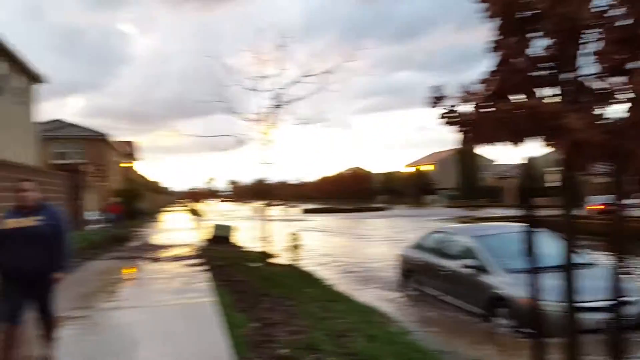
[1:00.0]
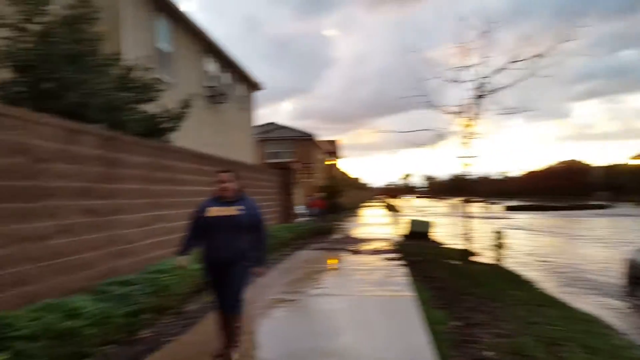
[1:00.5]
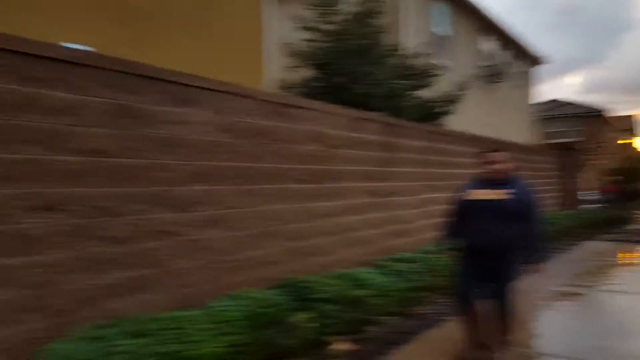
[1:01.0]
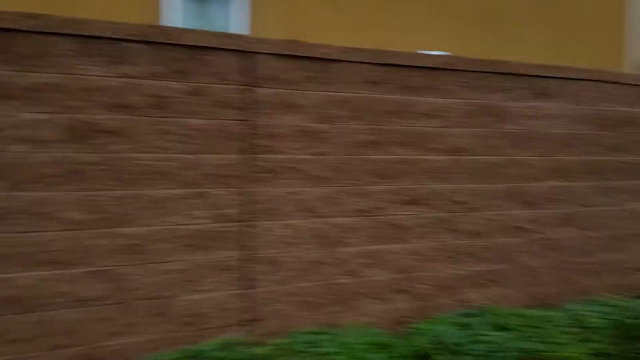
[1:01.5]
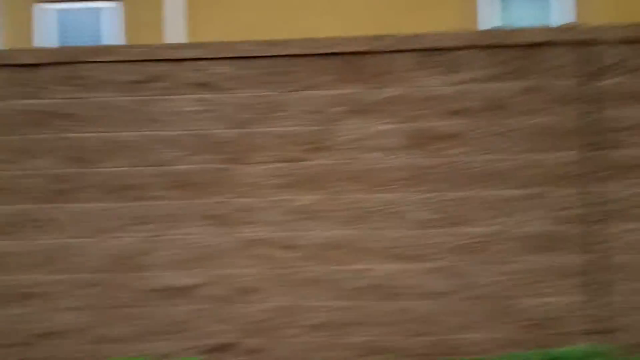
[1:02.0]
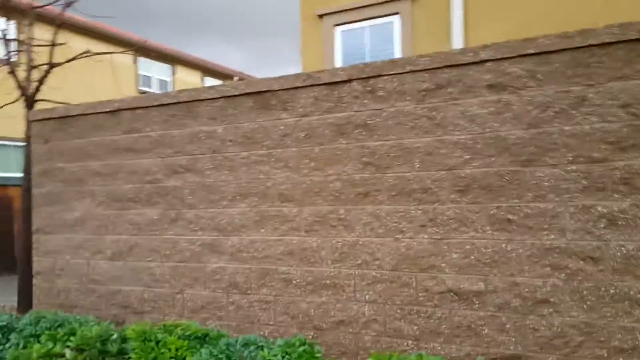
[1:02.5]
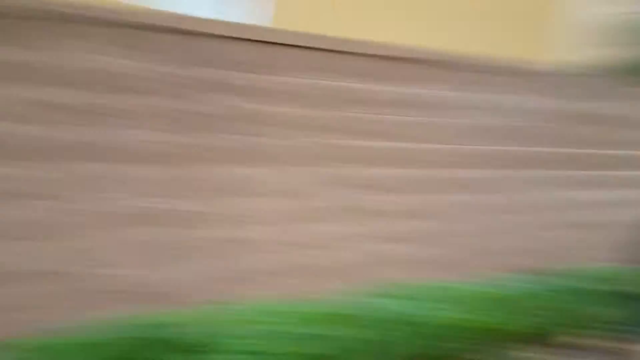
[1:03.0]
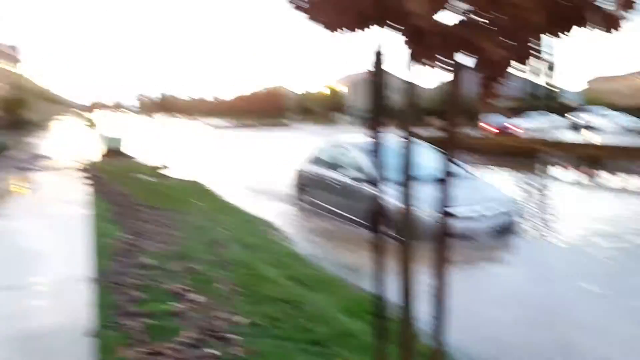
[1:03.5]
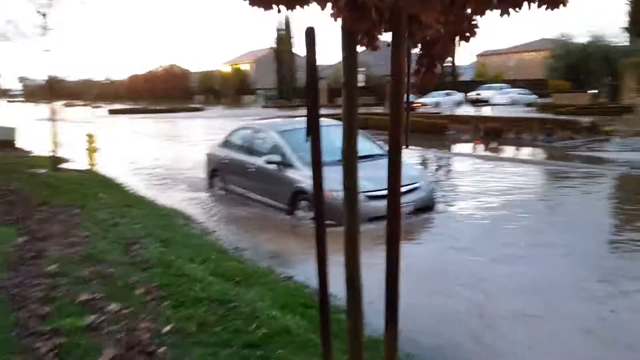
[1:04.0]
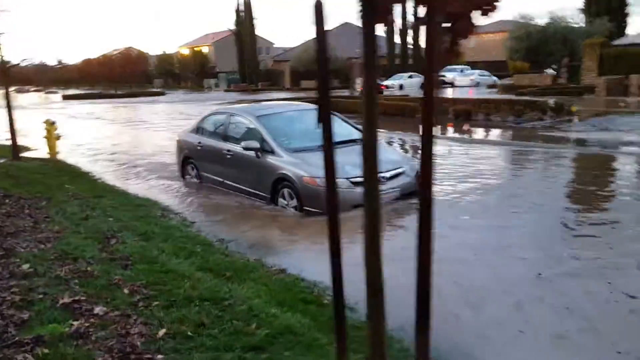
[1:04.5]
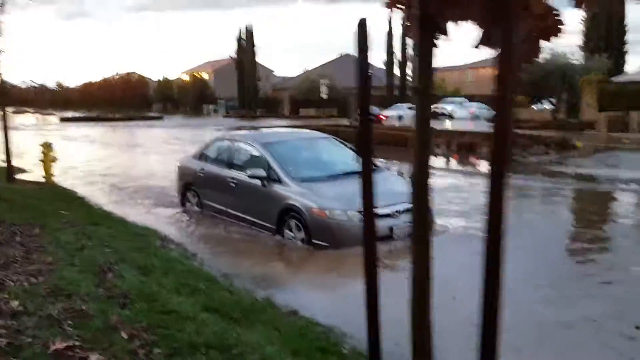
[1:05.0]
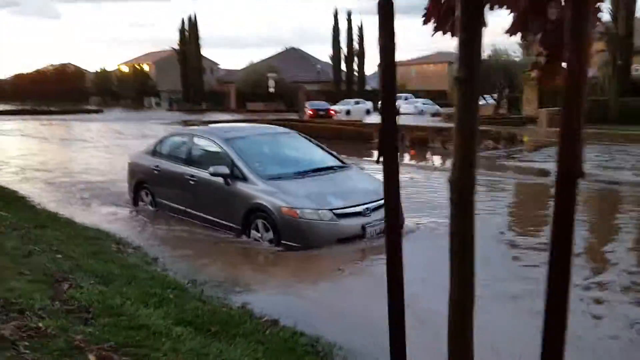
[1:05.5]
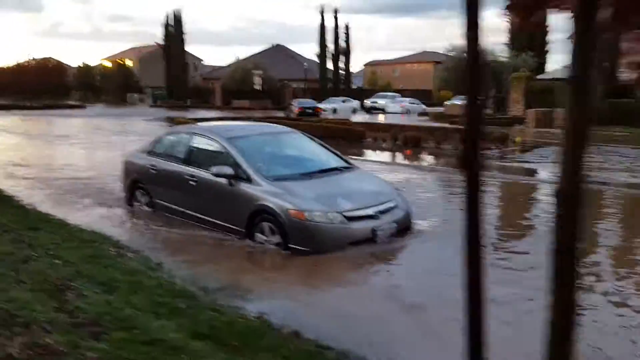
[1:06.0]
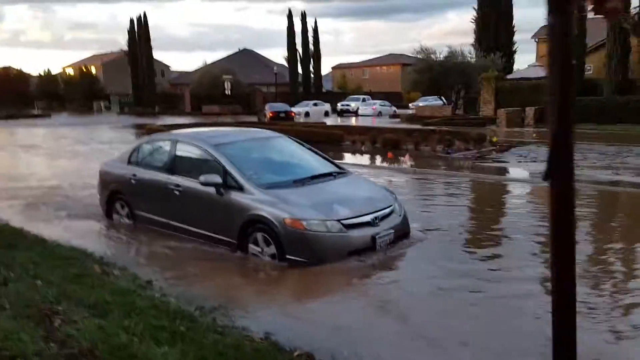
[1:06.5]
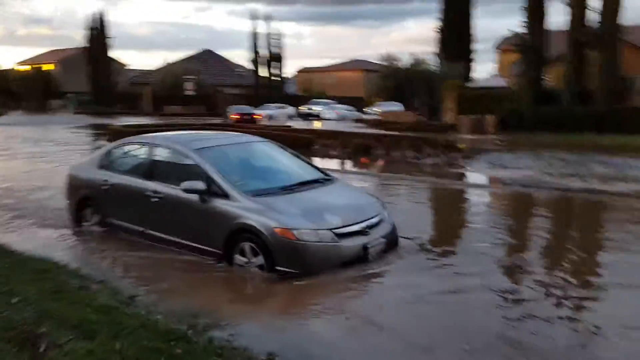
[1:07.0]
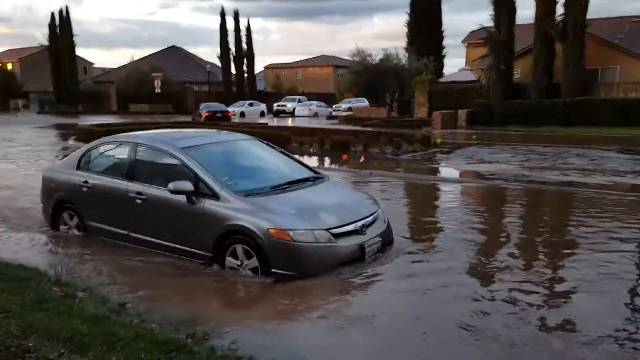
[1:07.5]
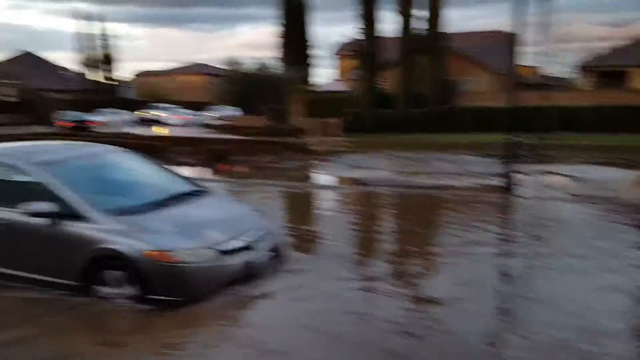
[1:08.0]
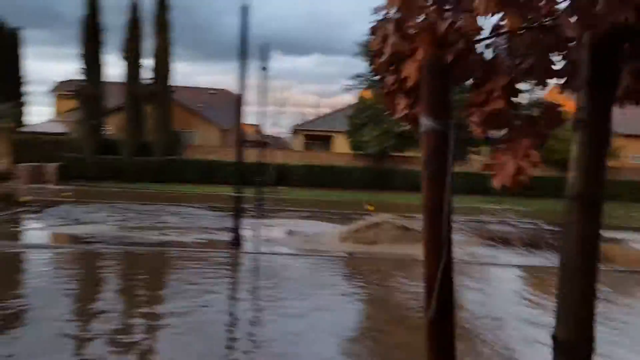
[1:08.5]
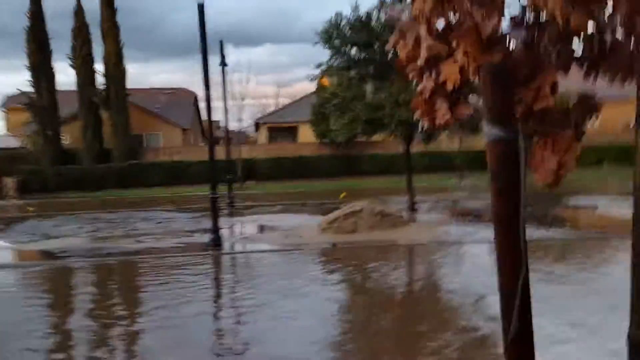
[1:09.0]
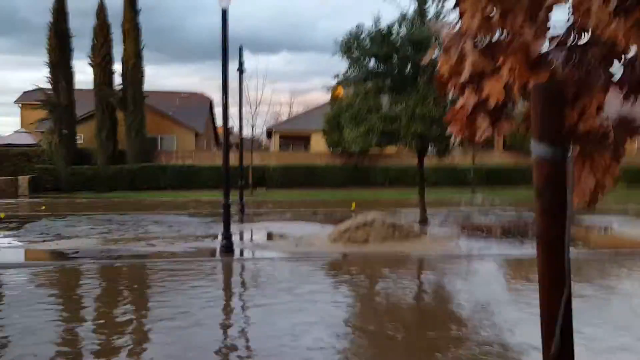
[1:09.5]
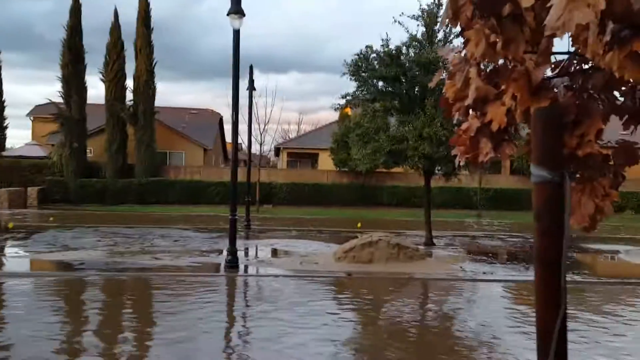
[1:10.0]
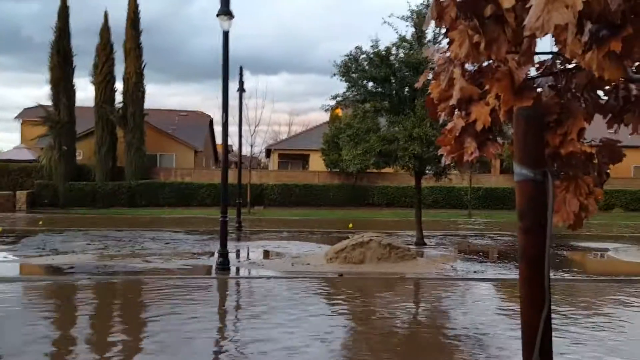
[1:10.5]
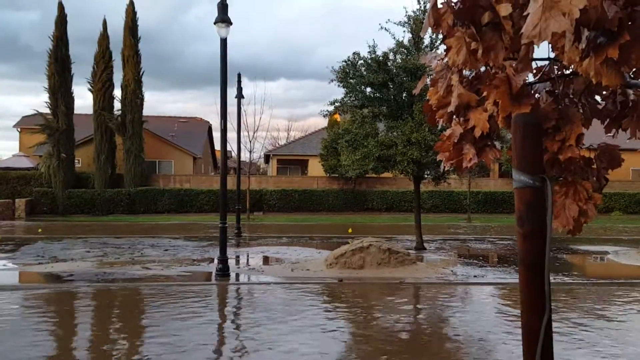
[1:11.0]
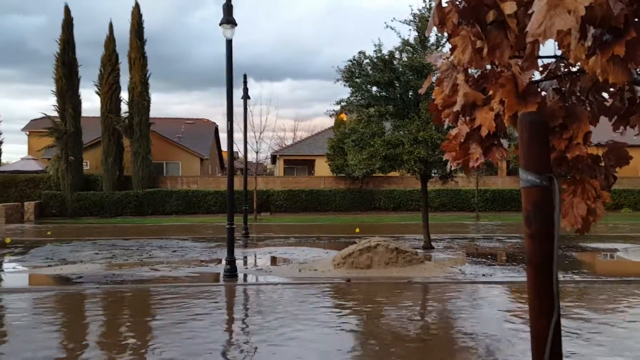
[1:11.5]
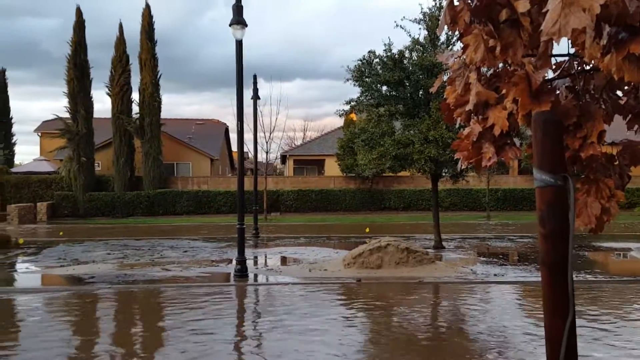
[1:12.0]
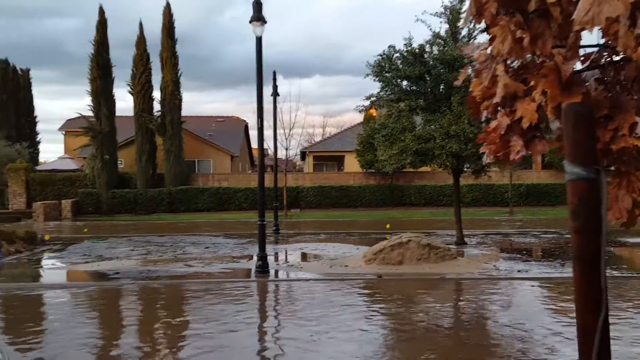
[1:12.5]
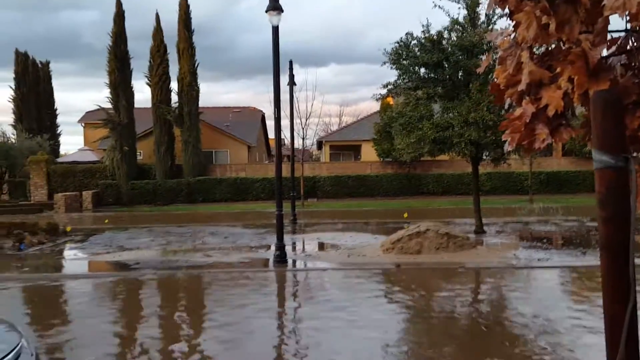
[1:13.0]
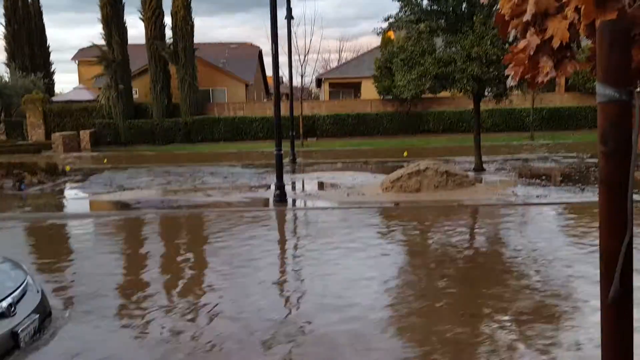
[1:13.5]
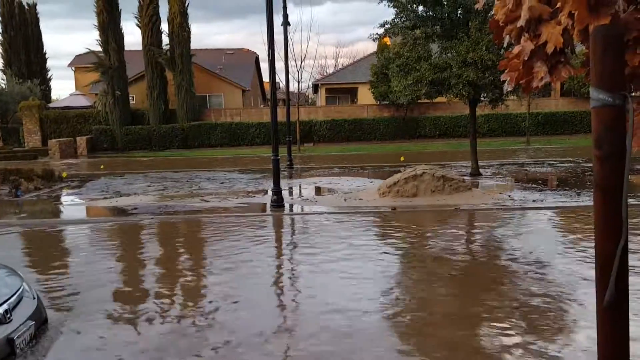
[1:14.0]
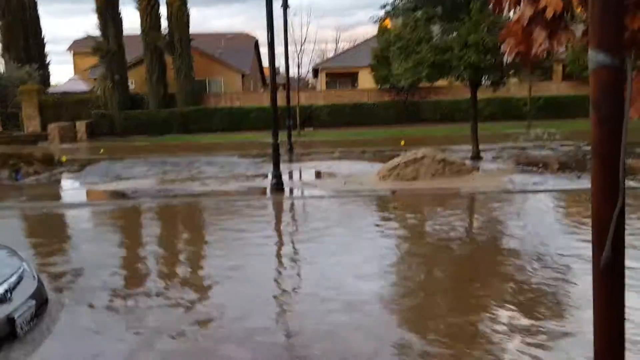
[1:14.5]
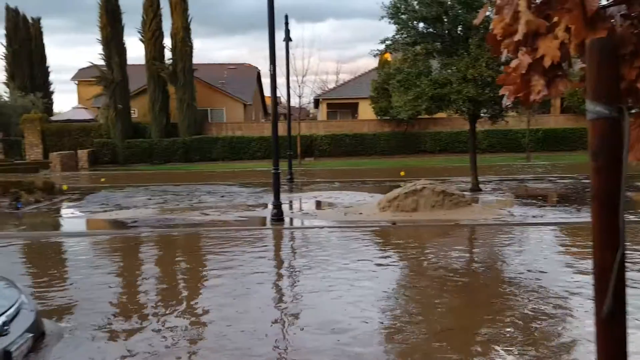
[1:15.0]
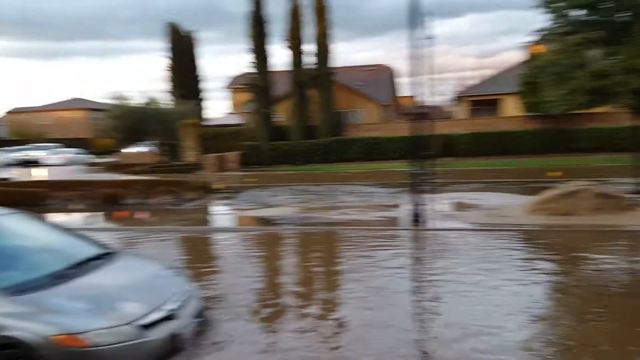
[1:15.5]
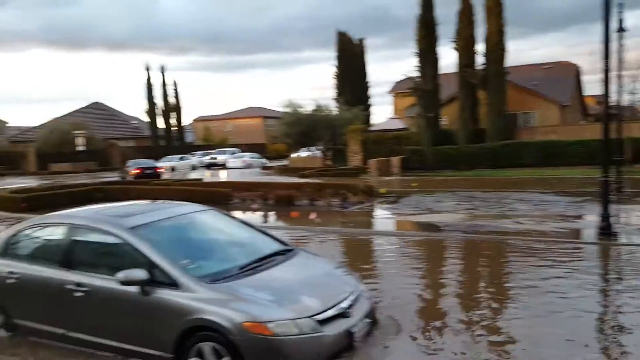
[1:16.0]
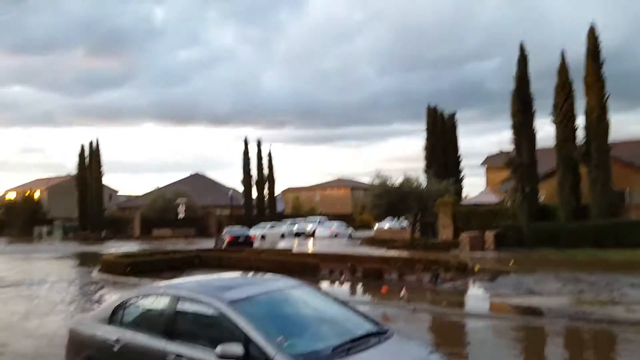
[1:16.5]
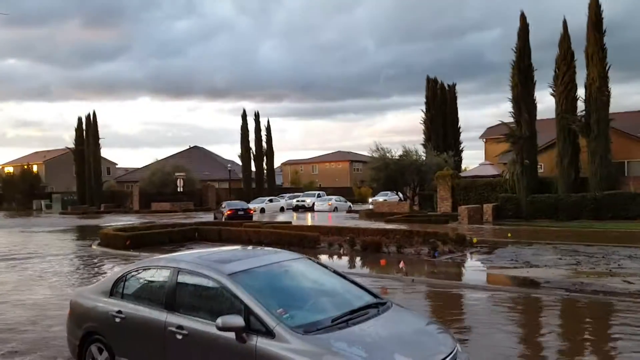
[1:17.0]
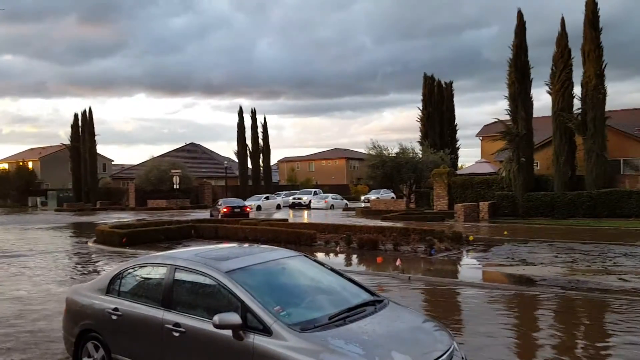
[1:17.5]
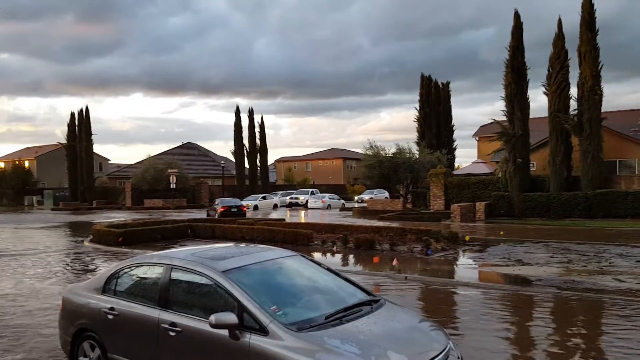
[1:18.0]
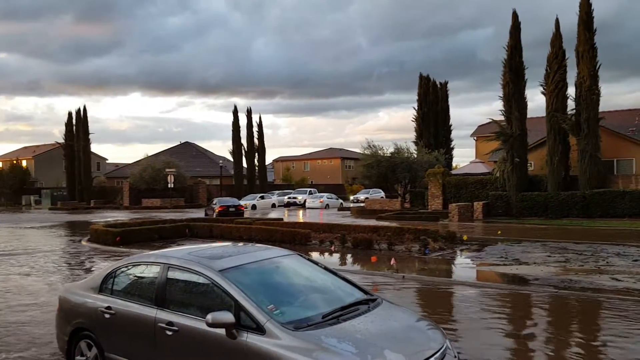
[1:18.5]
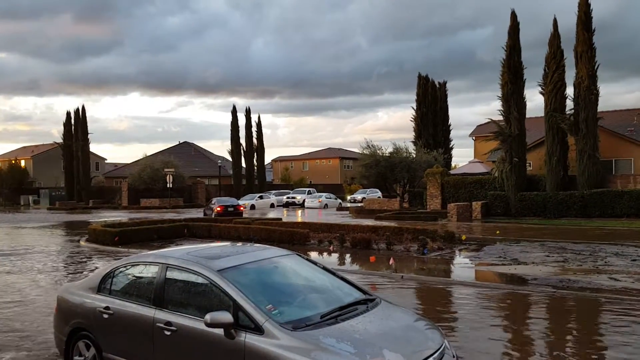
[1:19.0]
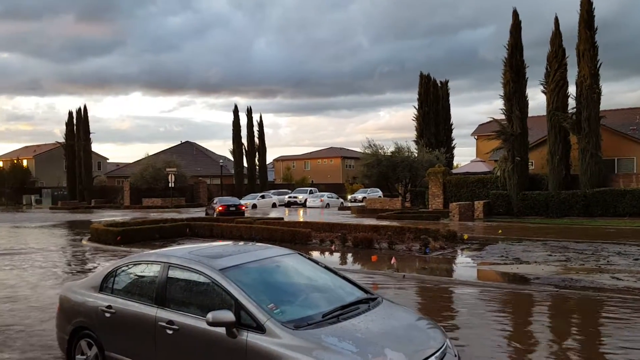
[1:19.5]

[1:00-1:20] The shaky handheld camera points at a flooded street where a grey car has almost its four wheels covered by water. The sky is quite cloudy, but some sunlight is hitting the water on the street. As the camera turns from right to left, a man wearing a hoodie walks by on the driveways, and there is a brick wall with a tree behind it and some houses behind that. He quickly pans the camera to the right and points it at the grey car as he keeps walking toward it, then moves the camera a little further right to film the brown-looking water on the street and the trees in the middle of the streets. In the background a few cars are parked, and a white car drives through the street.